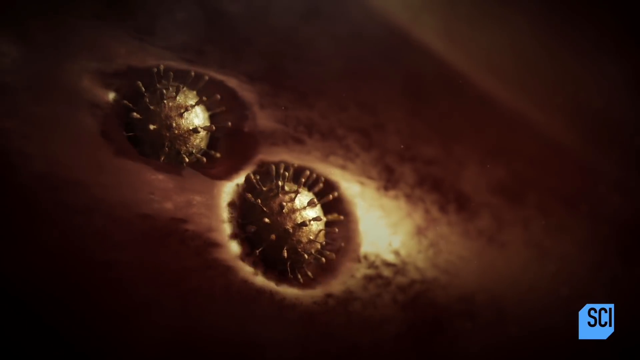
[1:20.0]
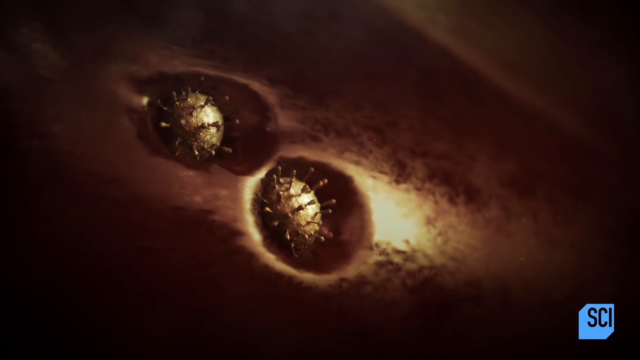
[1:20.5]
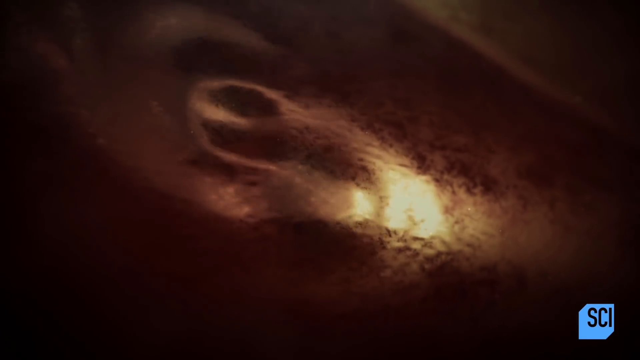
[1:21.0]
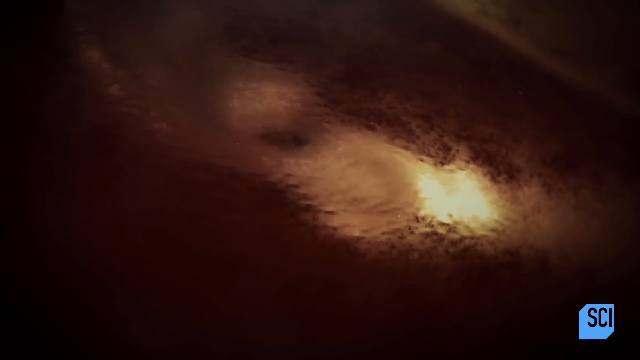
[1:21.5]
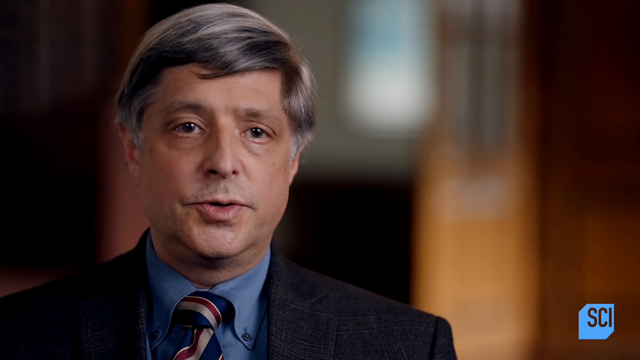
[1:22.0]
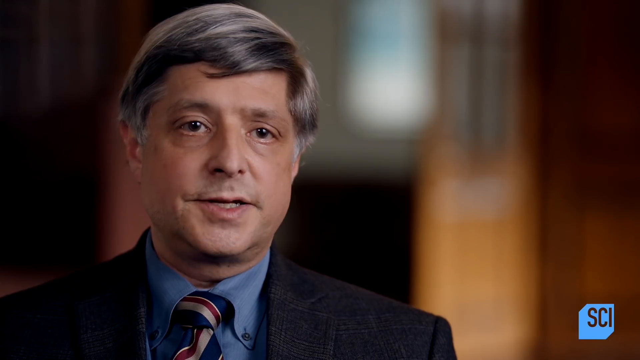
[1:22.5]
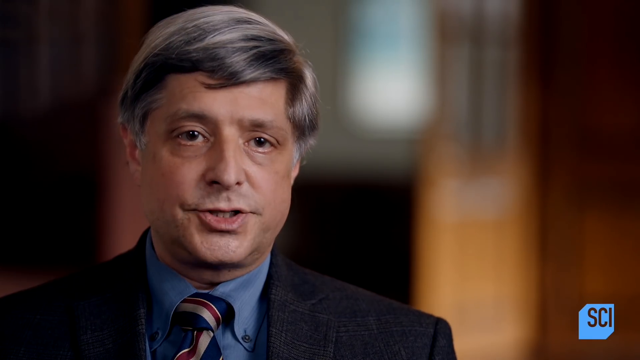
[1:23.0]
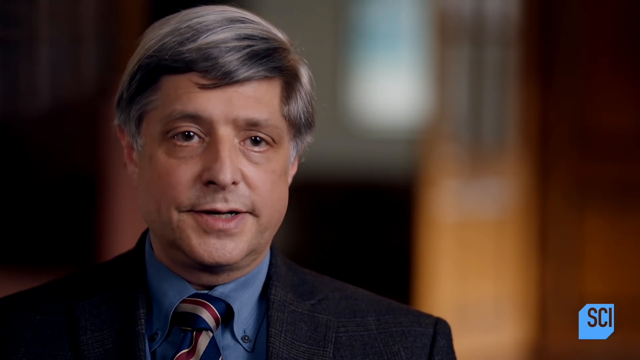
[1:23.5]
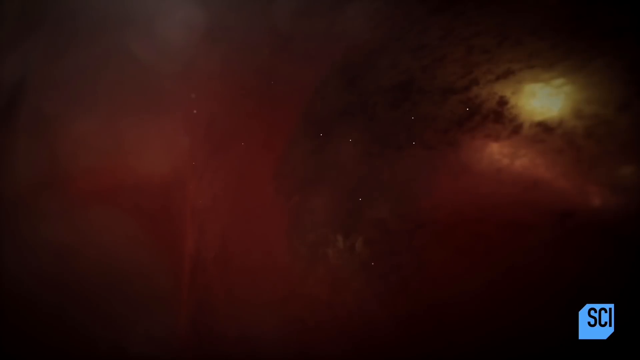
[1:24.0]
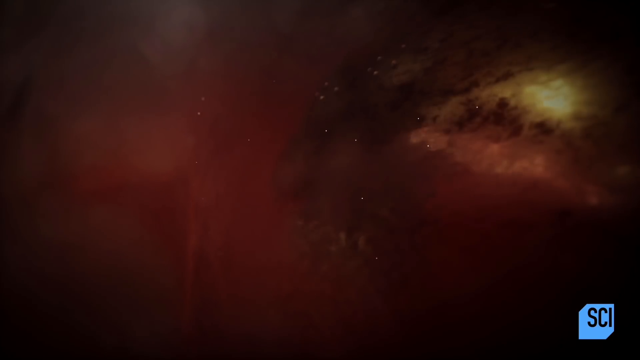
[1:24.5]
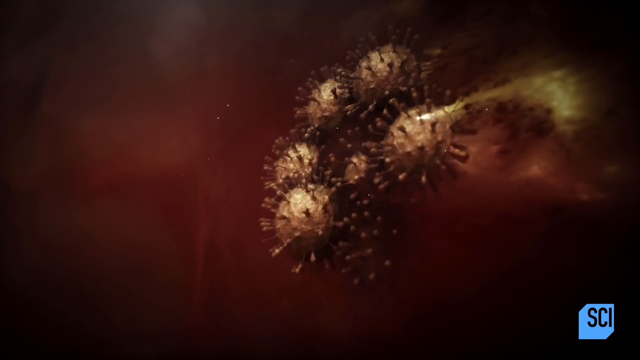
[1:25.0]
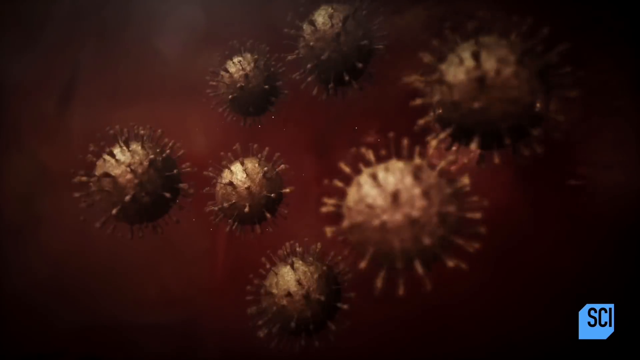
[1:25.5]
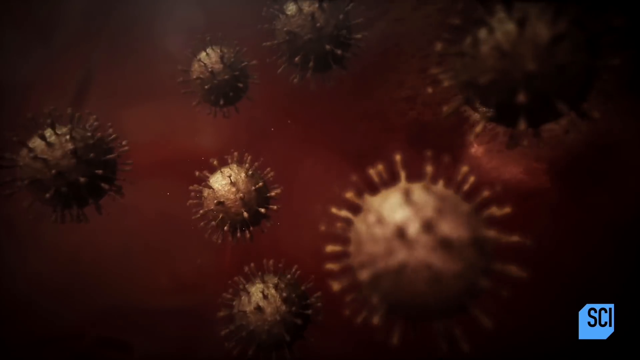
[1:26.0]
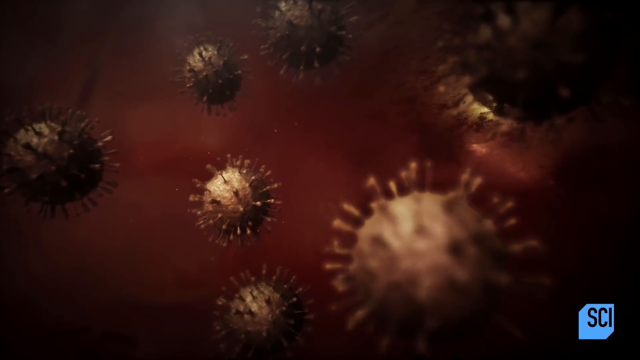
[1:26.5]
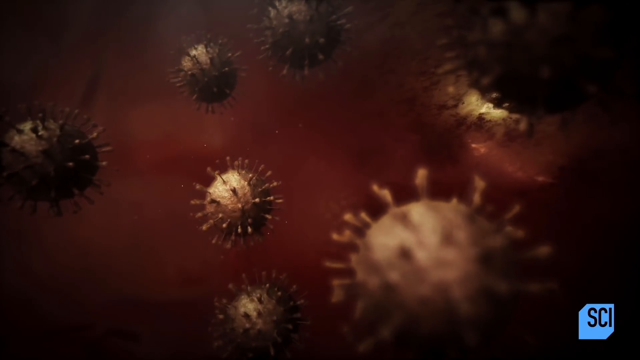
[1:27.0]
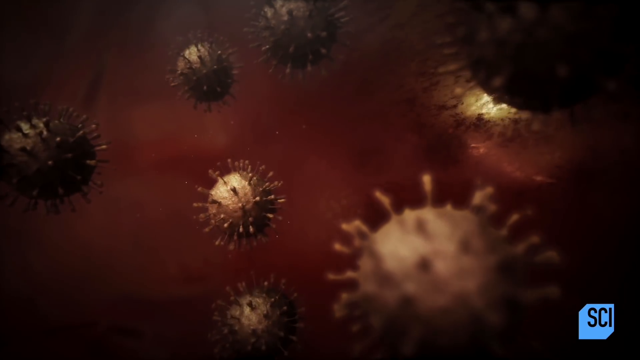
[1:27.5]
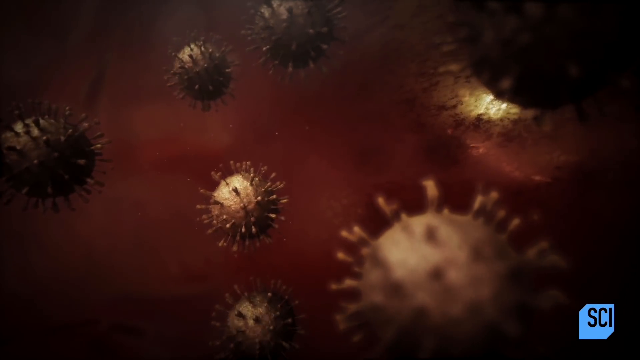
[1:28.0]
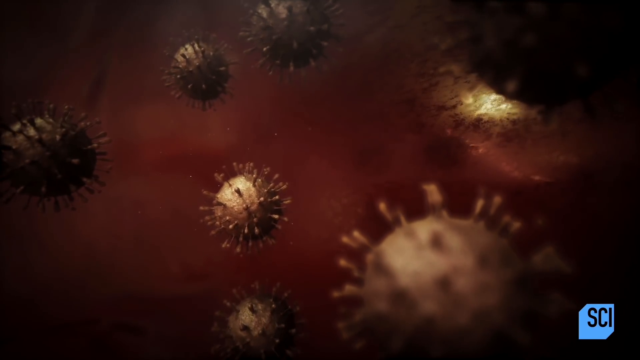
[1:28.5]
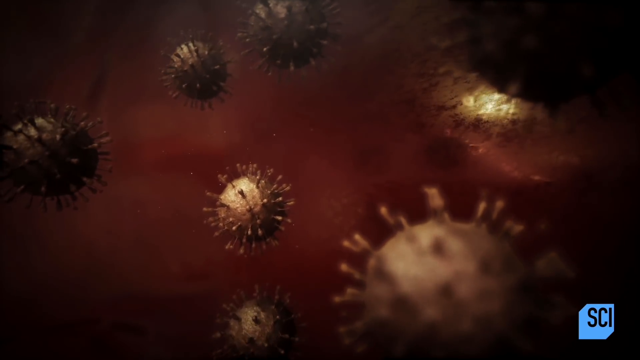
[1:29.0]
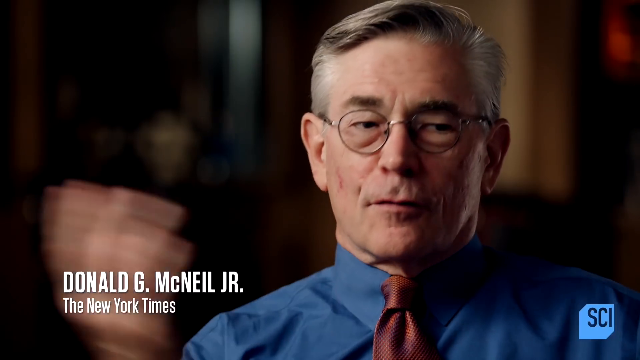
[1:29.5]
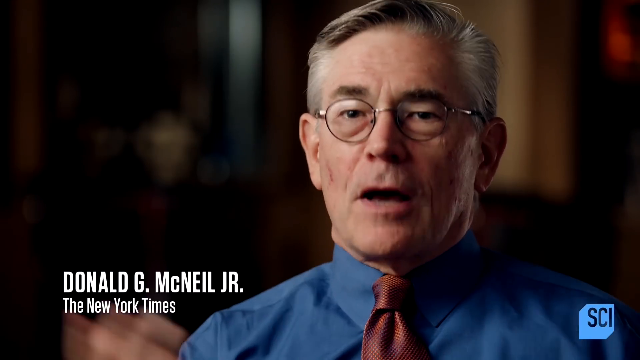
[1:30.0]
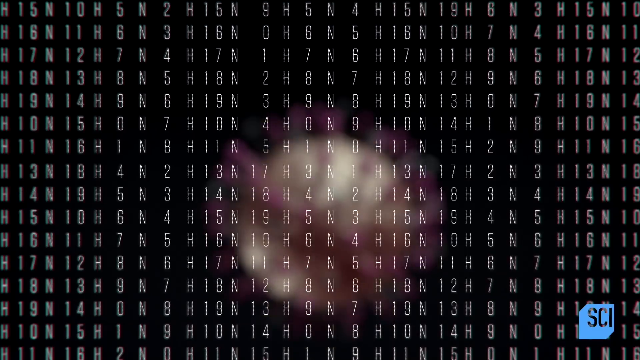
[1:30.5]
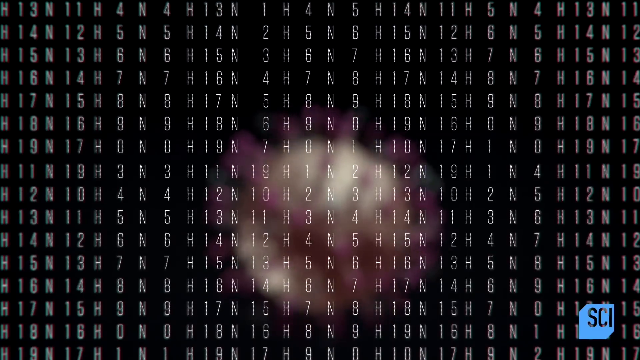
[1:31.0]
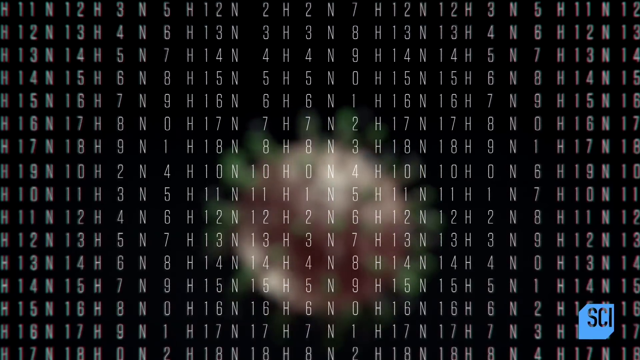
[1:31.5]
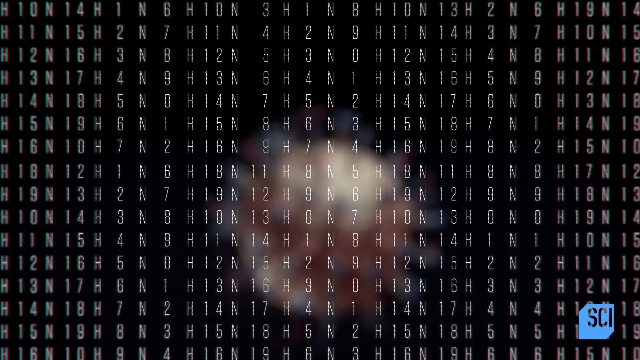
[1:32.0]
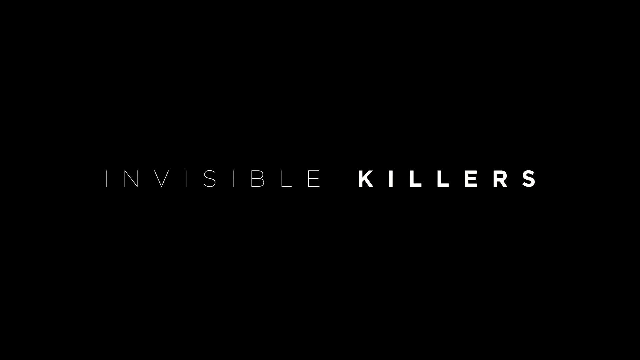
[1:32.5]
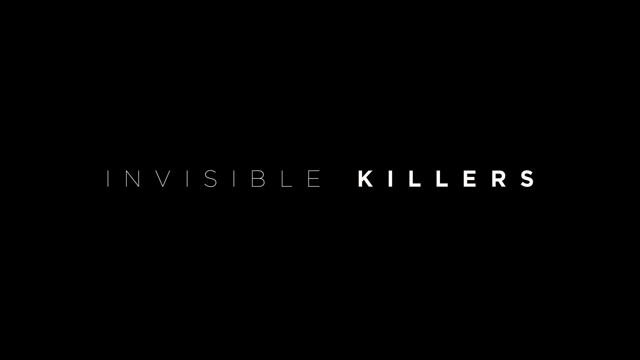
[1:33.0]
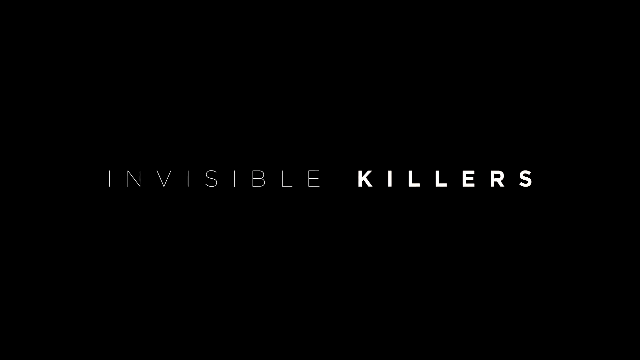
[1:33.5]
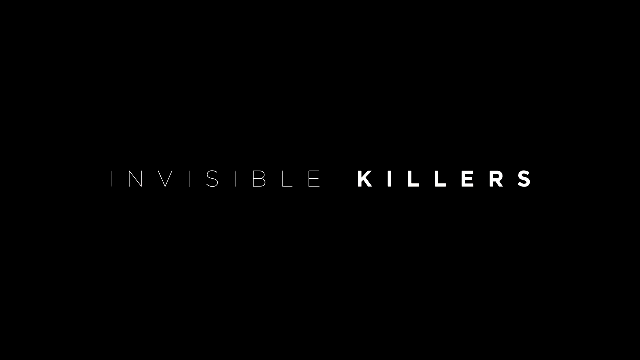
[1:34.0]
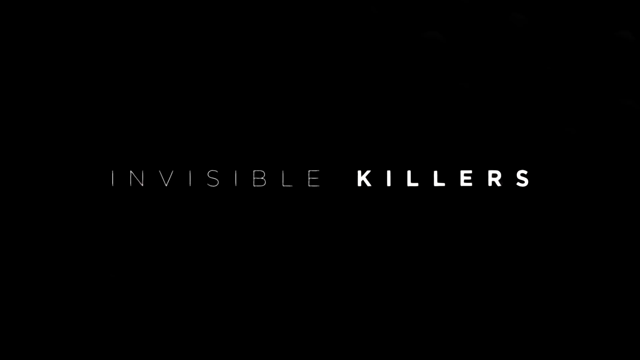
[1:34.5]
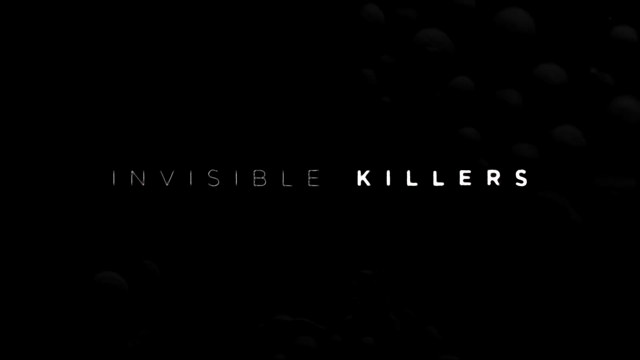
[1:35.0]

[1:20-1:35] Two of the gold, globe-shaped objects with spikes sink down into what looks like a river of gold behind them and are subsumed by the liquid, leaving a few bubbles on the surface. The image switches to a man with gray hair, brown eyes, a black suit jacket, a blue shirt and a tie; he is on the left-hand side of the screen and speaks directly to the camera. The image then changes to a deep gold and red background. After a moment, eight of the round, golden, globe-shaped objects with spikes suddenly appear, moving rapidly toward the camera and dispersing in all directions. In the background is orange, what looks like liquid, with one spot of bright yellow visible. The shot then changes to a man, with a caption reading "Donald G. McNeil, Jr." and below that "New York Times". He is an older man with gray hair that is clipped short, dark wire-rimmed glasses, a blue shirt and a red tie, speaking directly to the camera. The image then changes to the computer code of letters and numbers, including Hs, Ns, 6s, 1s and 5s, with a blurred gold globe rapidly spinning behind it. Finally, the screen changes to a black background with the white text "Invisible Killers".